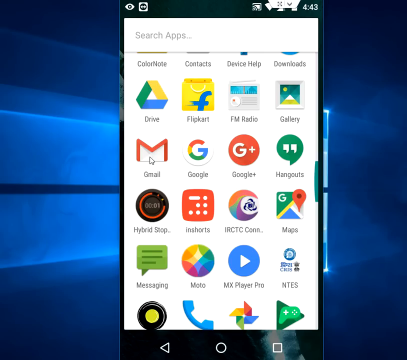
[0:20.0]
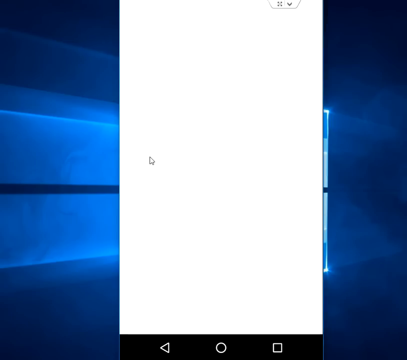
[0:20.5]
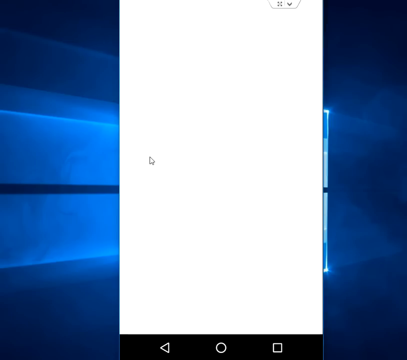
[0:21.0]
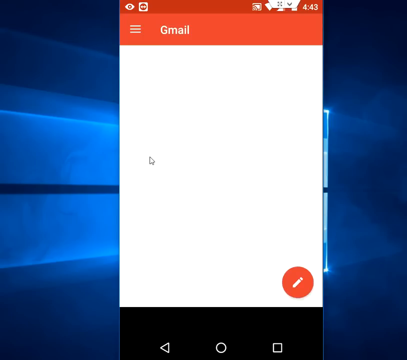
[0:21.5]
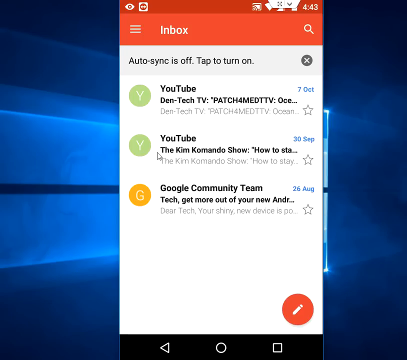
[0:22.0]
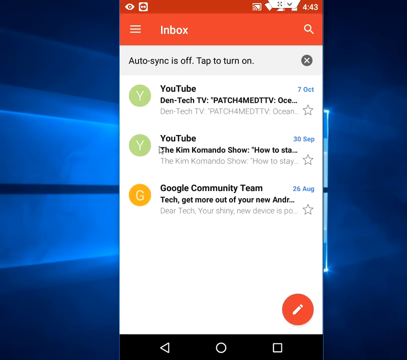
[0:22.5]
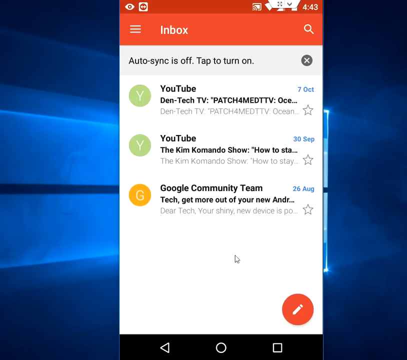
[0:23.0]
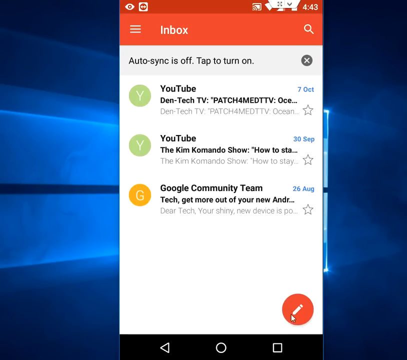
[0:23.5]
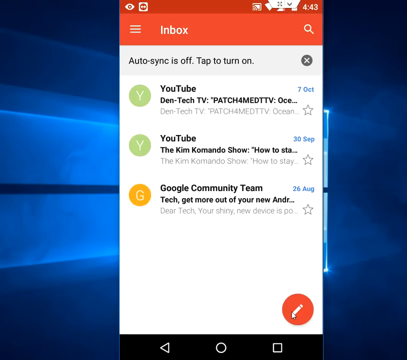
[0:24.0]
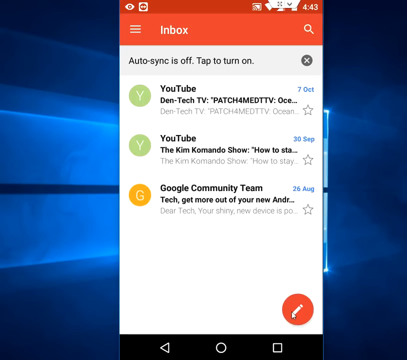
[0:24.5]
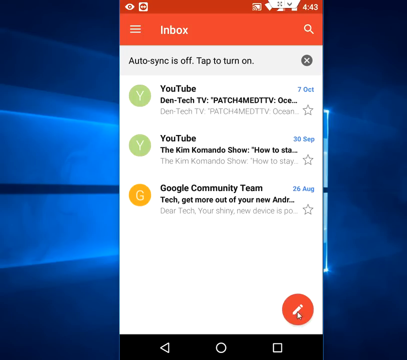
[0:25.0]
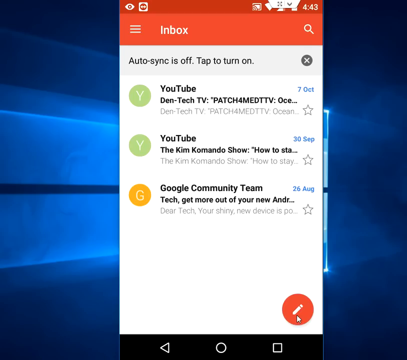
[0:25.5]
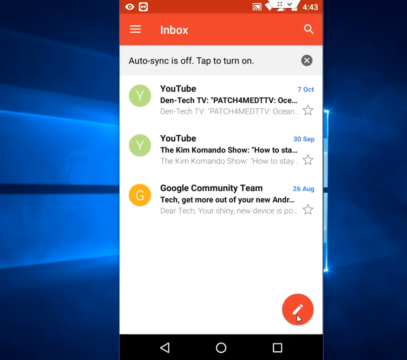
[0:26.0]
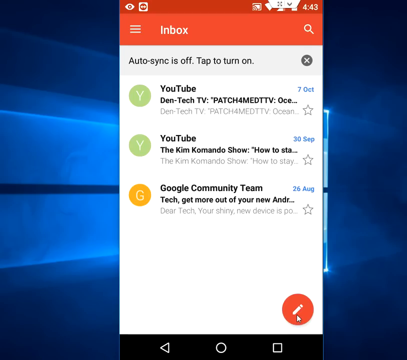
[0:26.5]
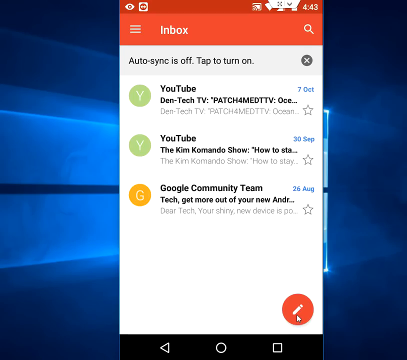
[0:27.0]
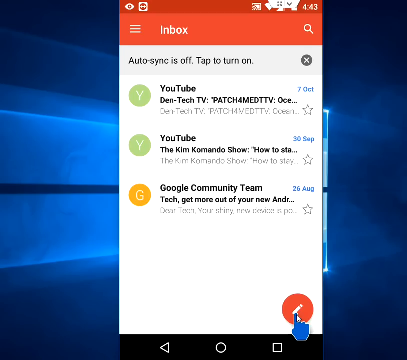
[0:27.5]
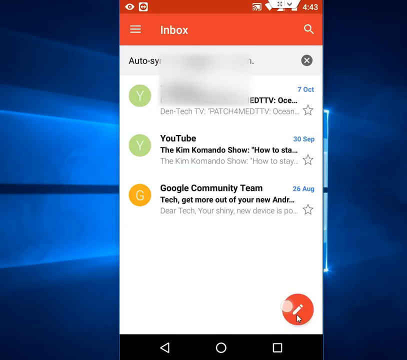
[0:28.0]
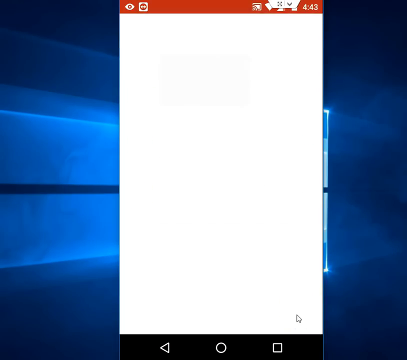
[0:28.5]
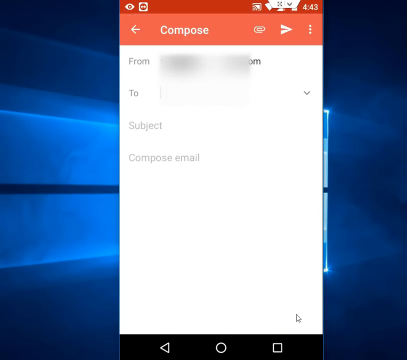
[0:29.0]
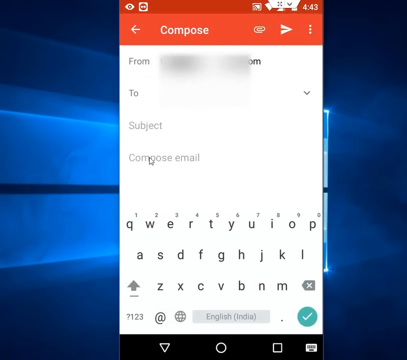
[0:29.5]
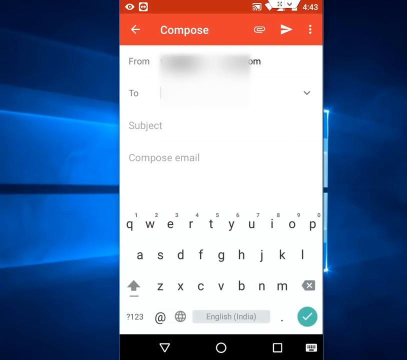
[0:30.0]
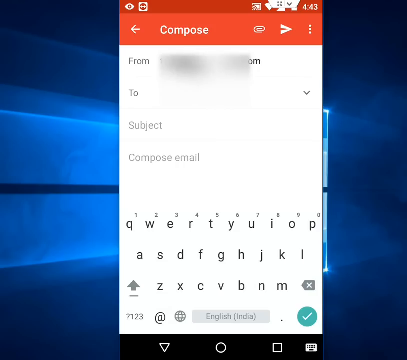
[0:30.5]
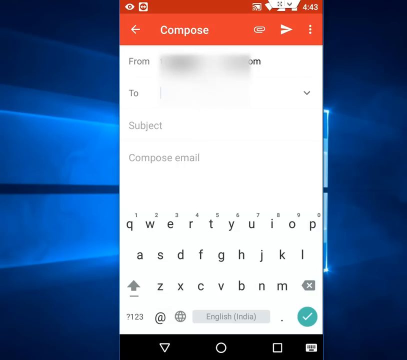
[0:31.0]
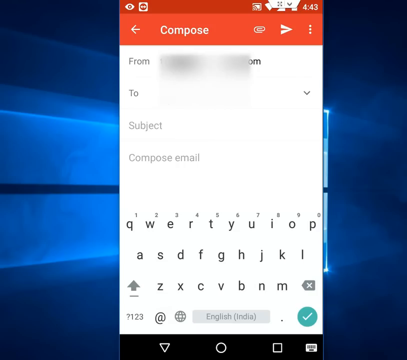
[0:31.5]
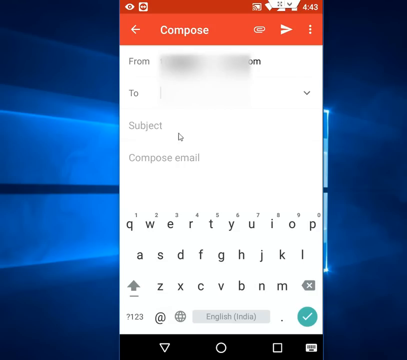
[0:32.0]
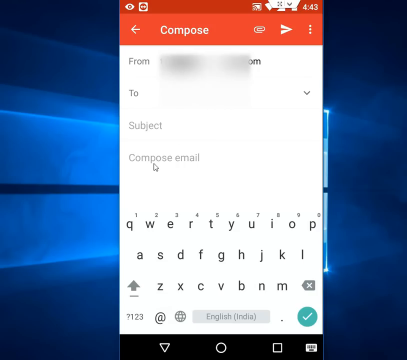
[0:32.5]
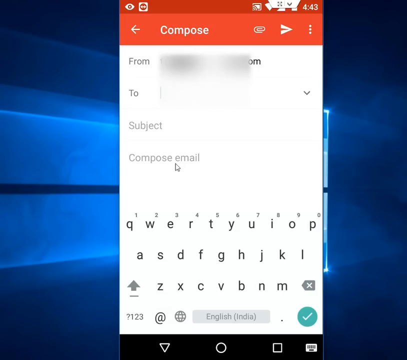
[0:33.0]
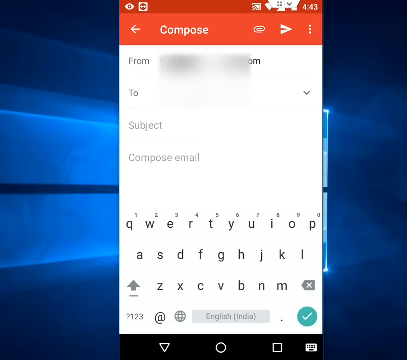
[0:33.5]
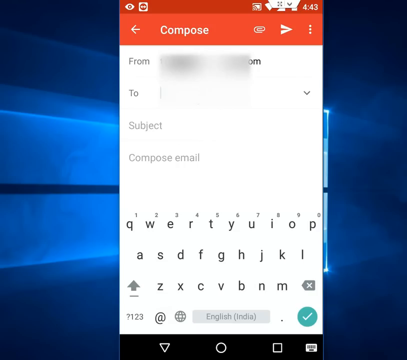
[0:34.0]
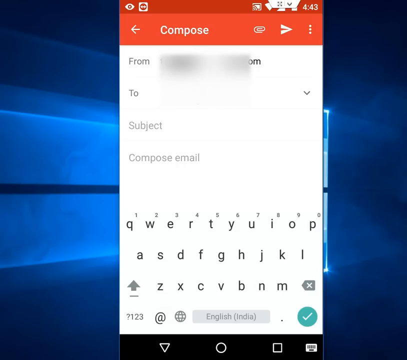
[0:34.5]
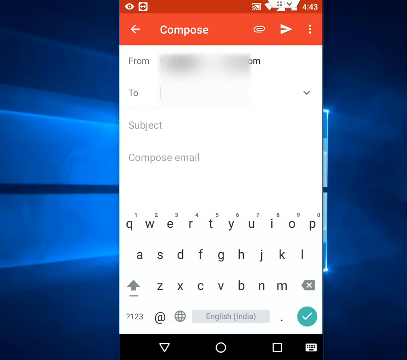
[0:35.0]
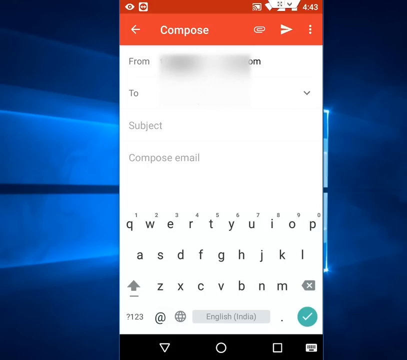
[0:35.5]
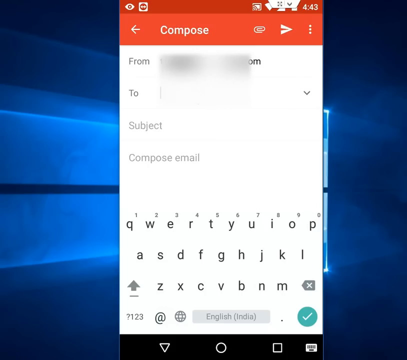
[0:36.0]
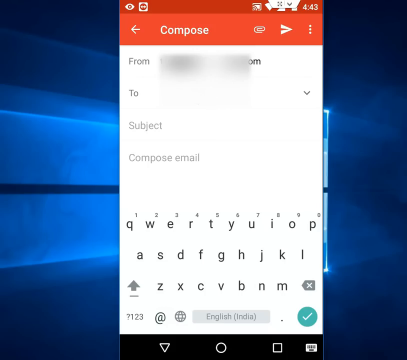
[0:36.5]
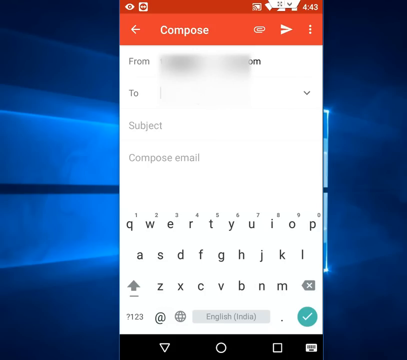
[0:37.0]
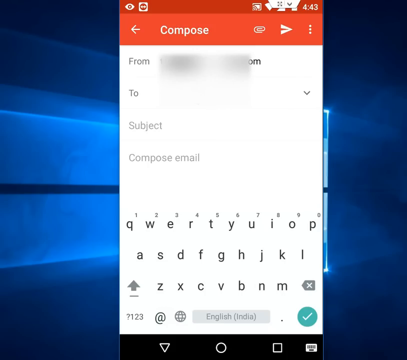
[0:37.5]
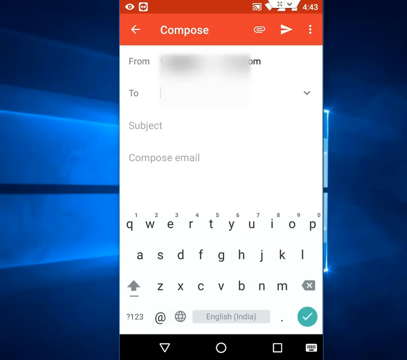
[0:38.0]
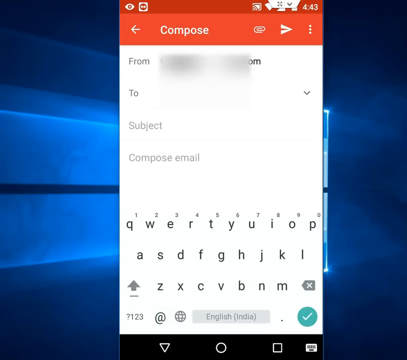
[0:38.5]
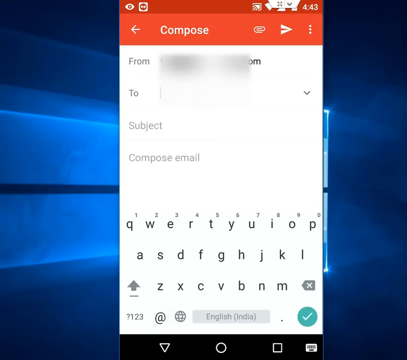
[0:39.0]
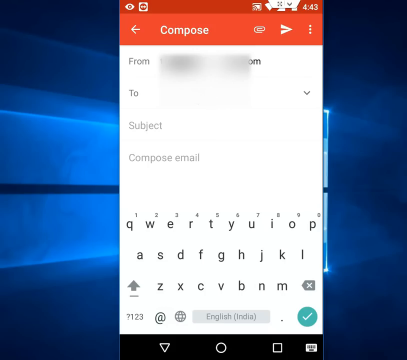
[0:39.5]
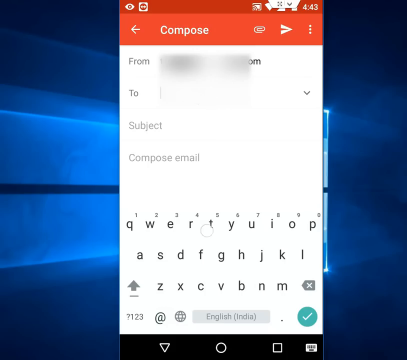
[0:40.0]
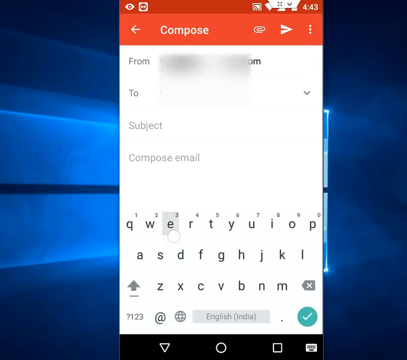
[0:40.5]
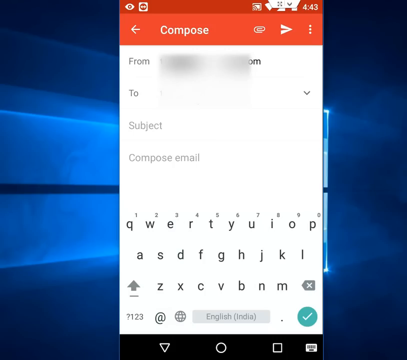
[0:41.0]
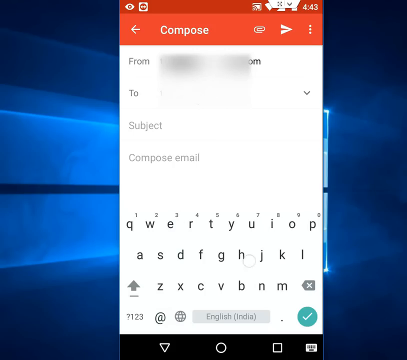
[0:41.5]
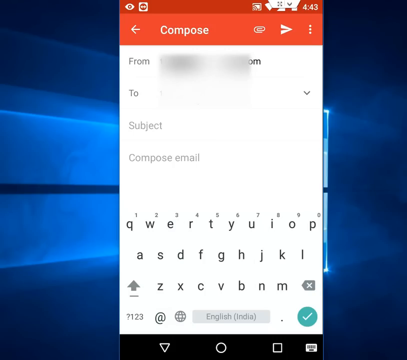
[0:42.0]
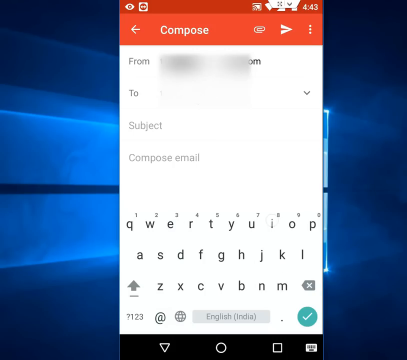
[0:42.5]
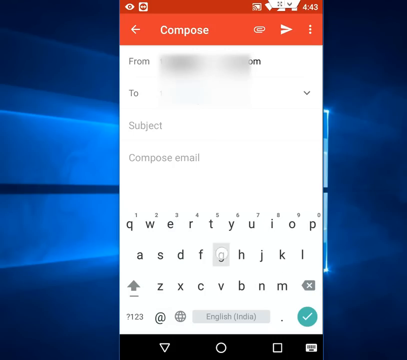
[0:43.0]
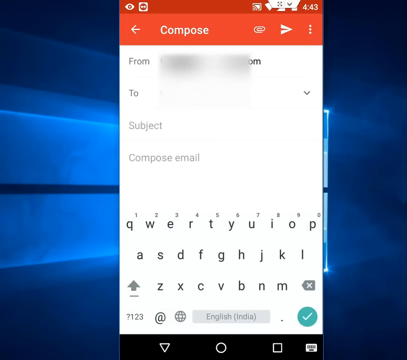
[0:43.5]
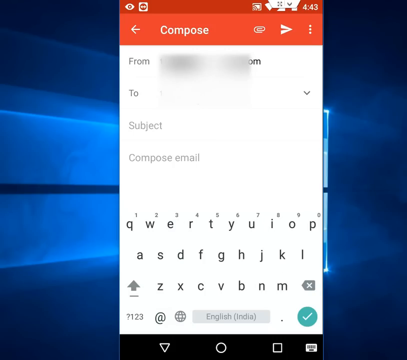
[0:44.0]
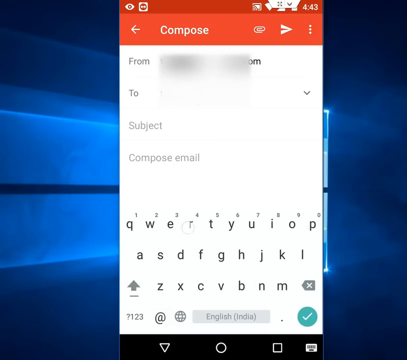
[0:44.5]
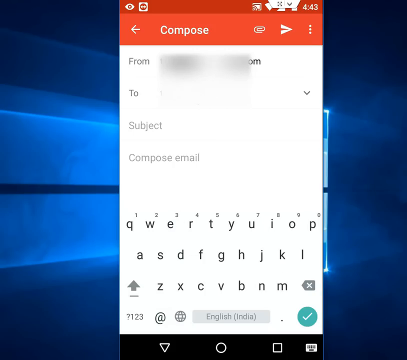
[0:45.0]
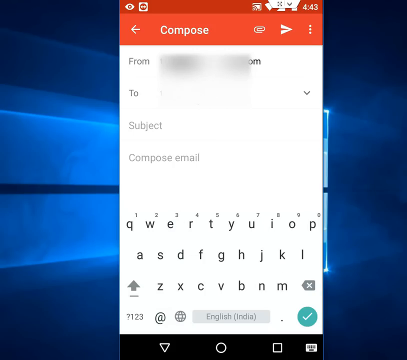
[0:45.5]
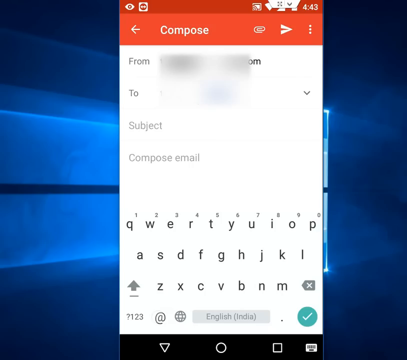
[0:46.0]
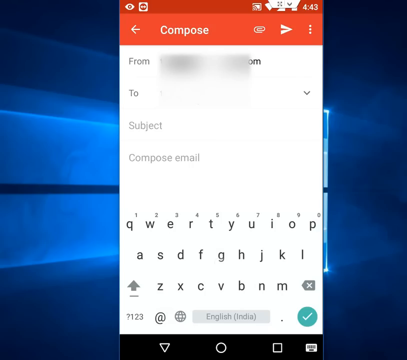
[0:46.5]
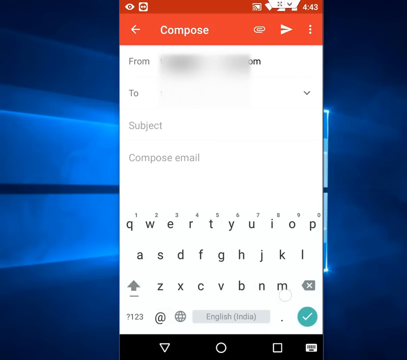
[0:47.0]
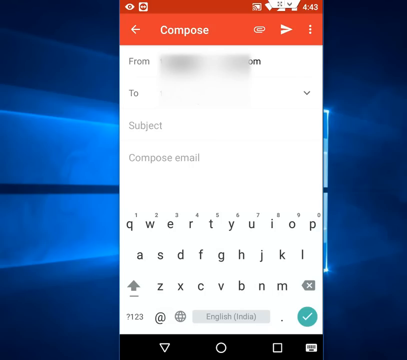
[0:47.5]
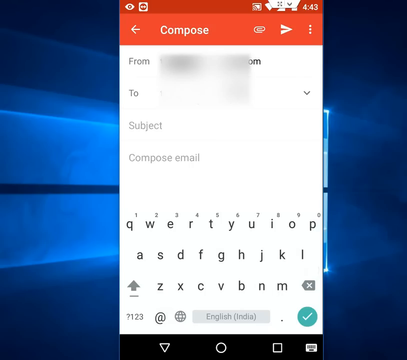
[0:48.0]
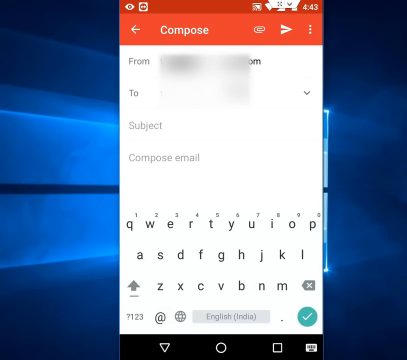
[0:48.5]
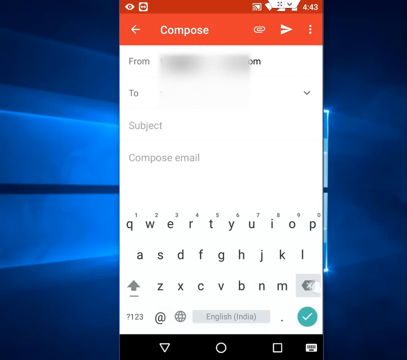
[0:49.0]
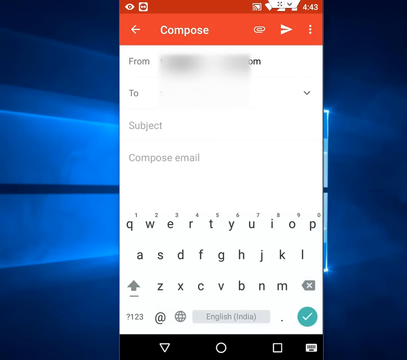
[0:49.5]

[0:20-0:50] The phone screen is shown on a blue backdrop. An option has been clicked to show how to compose an email. An orangish, rust-colored ribbon runs across the top, with an arrow pointing left beside "compose", a paper clip icon, and a white triangle pointing to the right. Back in the inbox, a message reads "auto sync is off, tap to turn on", with a gray circle containing an X beside it. Above that is the word "inbox", with three horizontal lines to its left, still on the rust-colored ribbon. On the far right is an hourglass icon for search. Among the synced emails is one from YouTube, "Den Tech TV", dated October 7, marked by a green circle with a white Y in it.